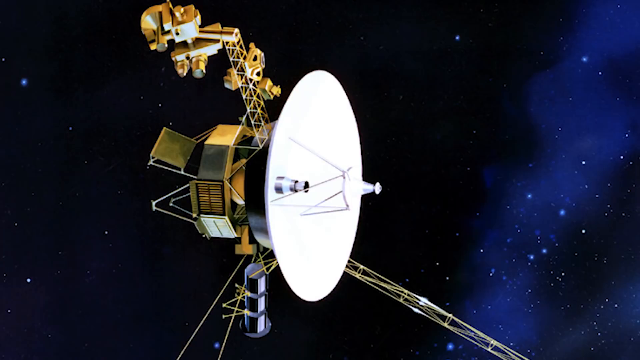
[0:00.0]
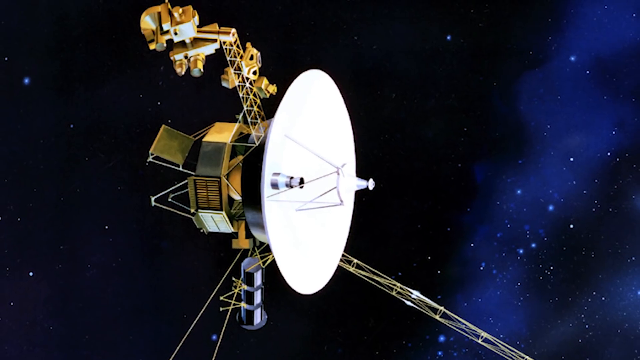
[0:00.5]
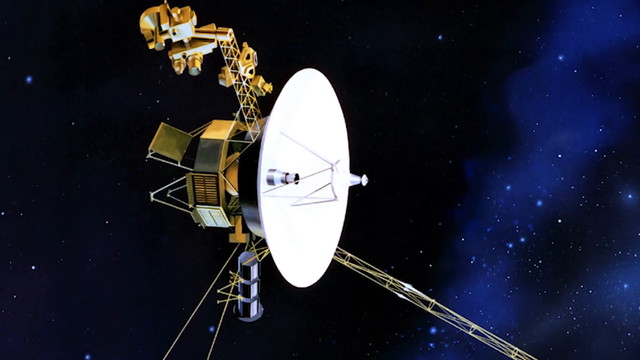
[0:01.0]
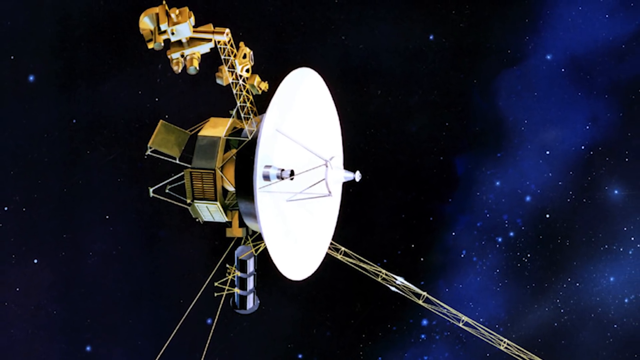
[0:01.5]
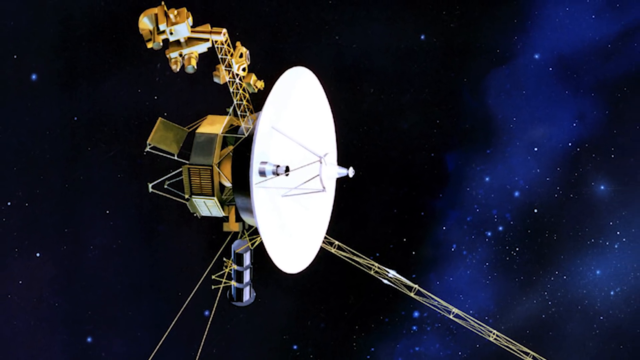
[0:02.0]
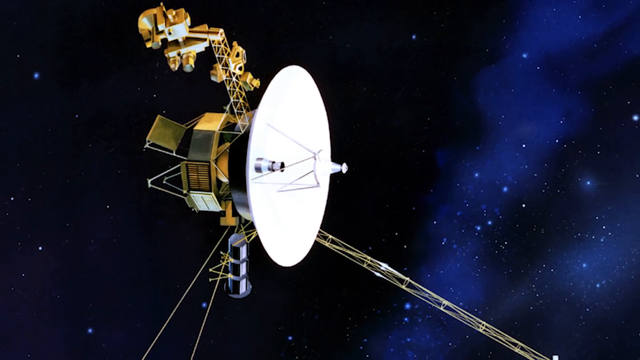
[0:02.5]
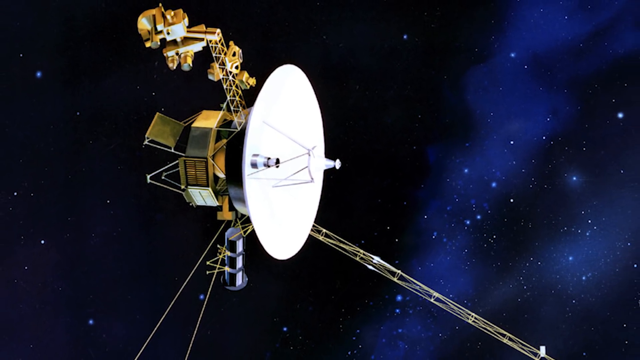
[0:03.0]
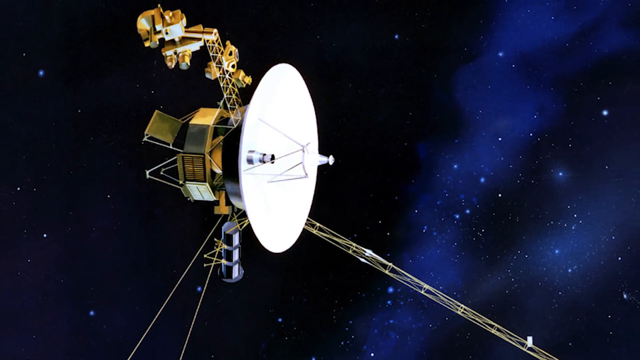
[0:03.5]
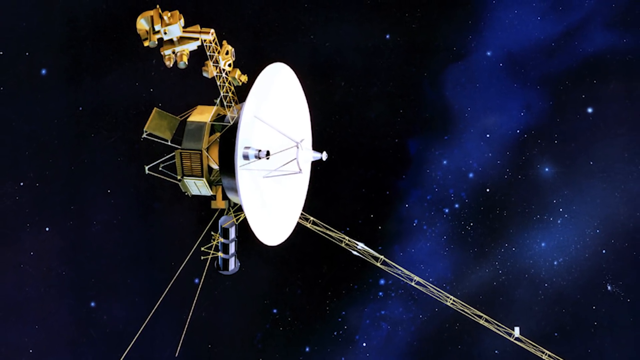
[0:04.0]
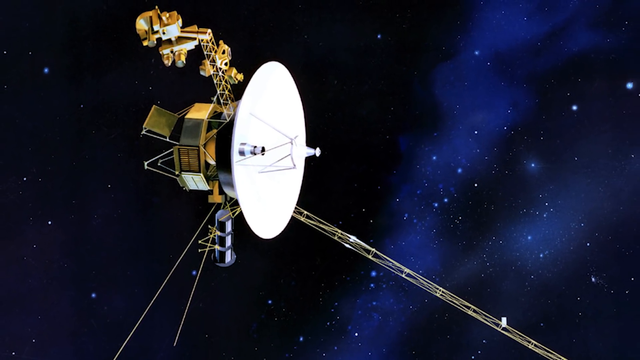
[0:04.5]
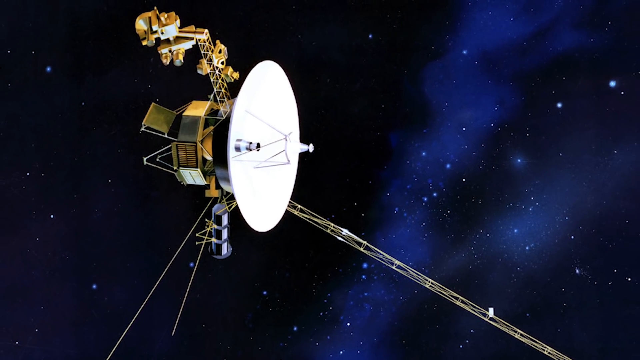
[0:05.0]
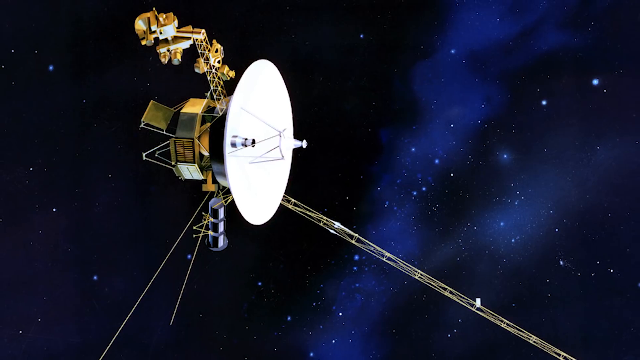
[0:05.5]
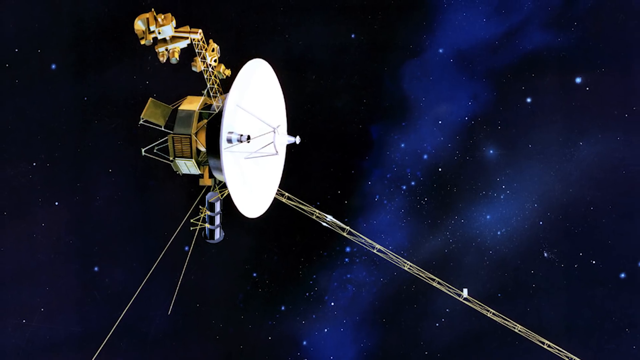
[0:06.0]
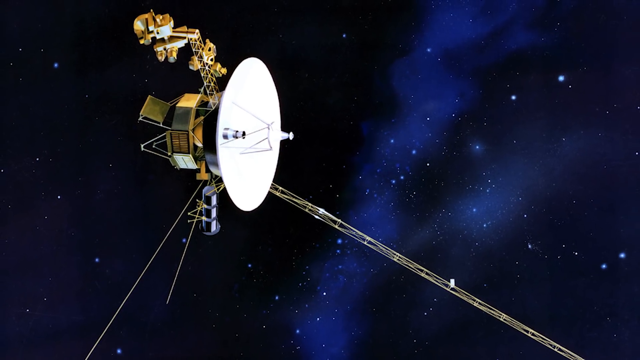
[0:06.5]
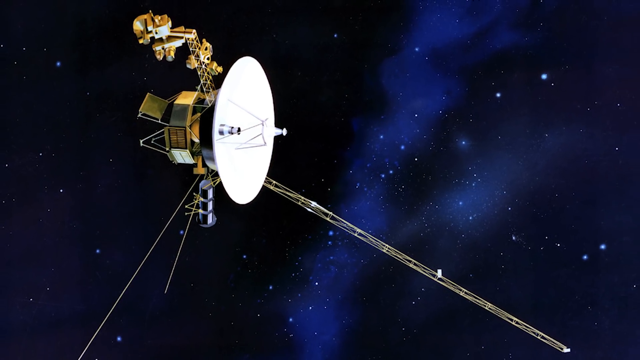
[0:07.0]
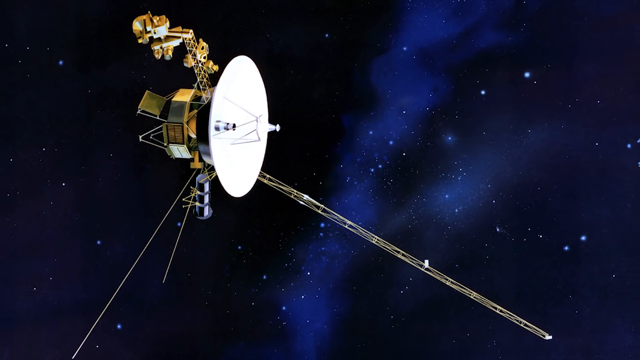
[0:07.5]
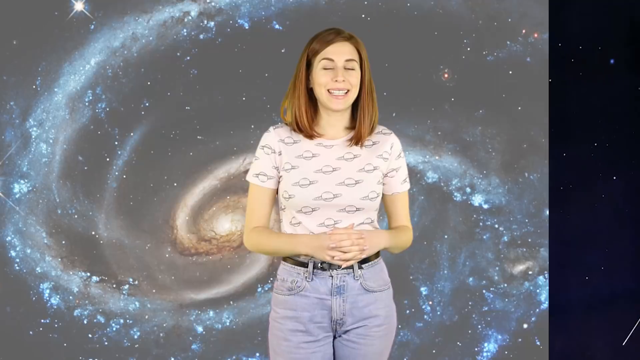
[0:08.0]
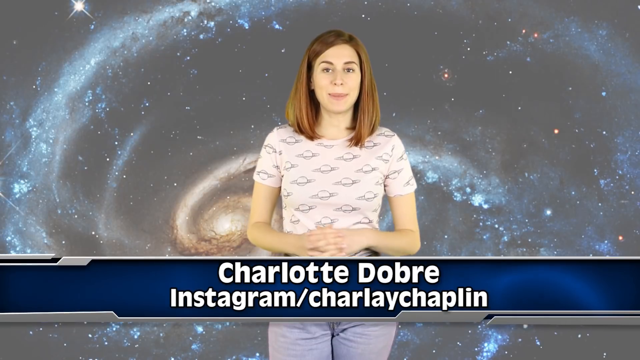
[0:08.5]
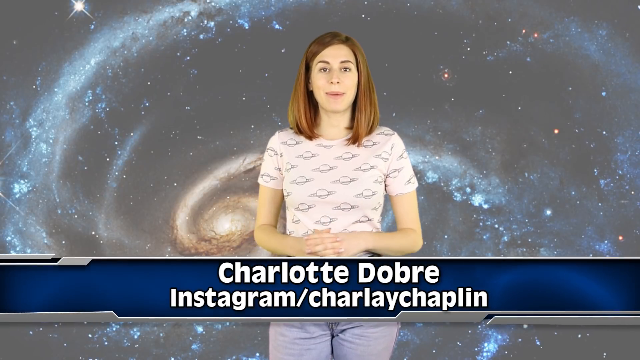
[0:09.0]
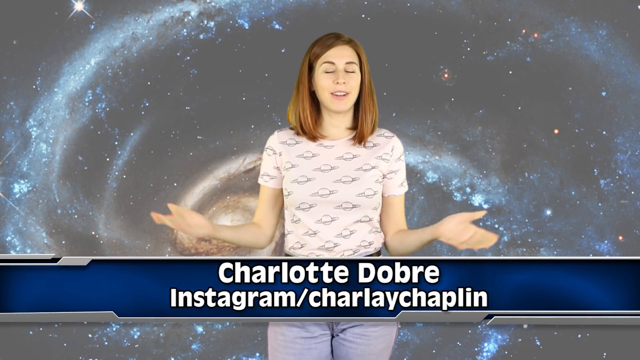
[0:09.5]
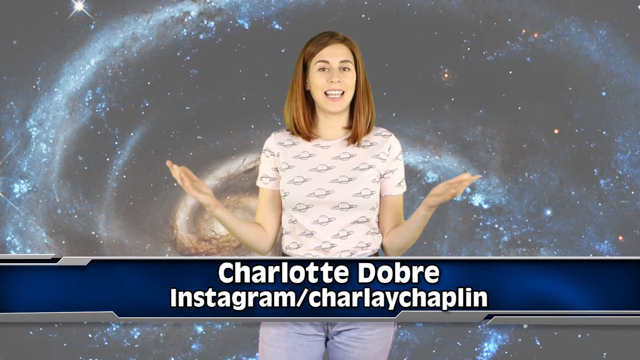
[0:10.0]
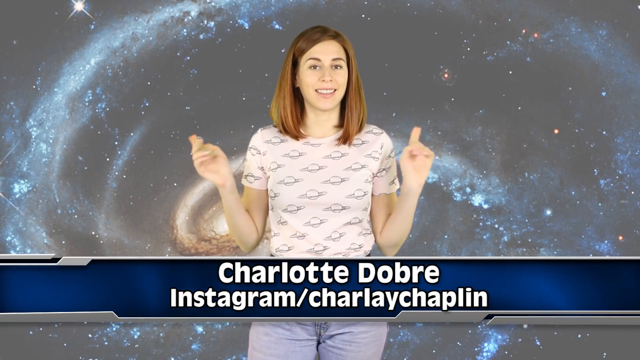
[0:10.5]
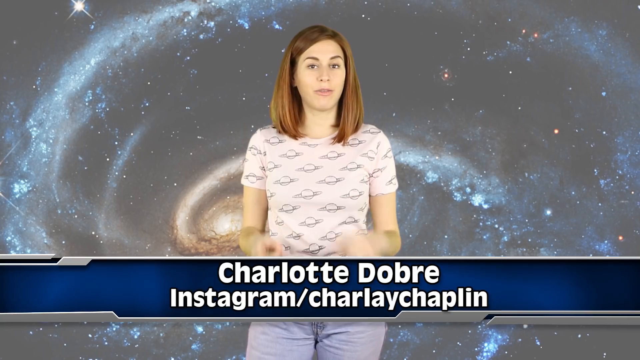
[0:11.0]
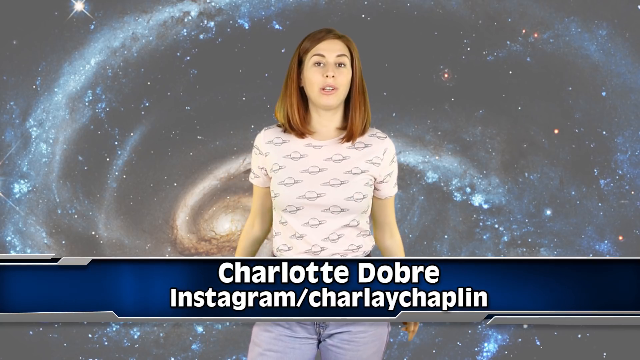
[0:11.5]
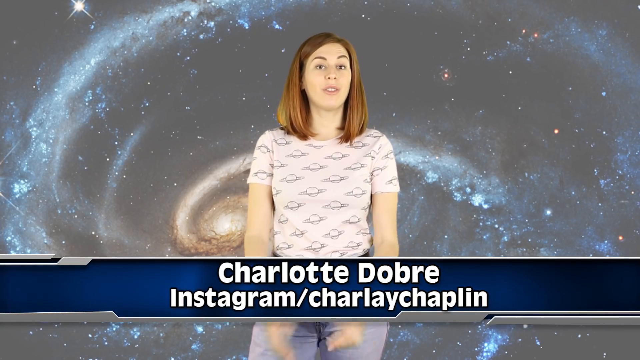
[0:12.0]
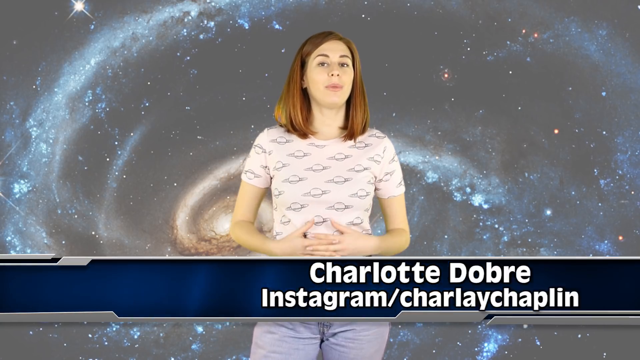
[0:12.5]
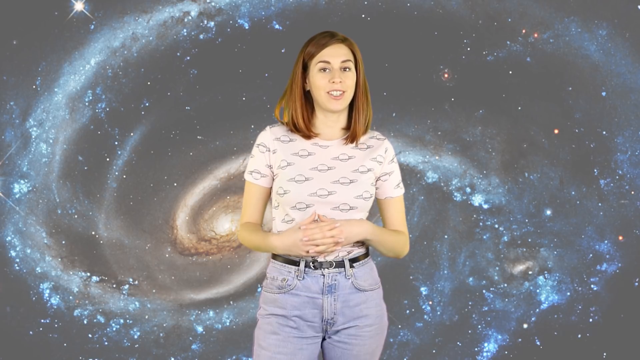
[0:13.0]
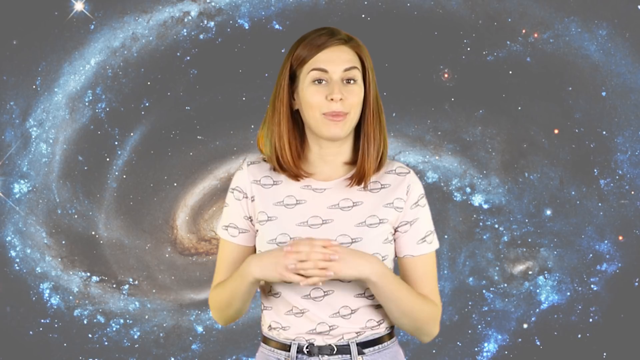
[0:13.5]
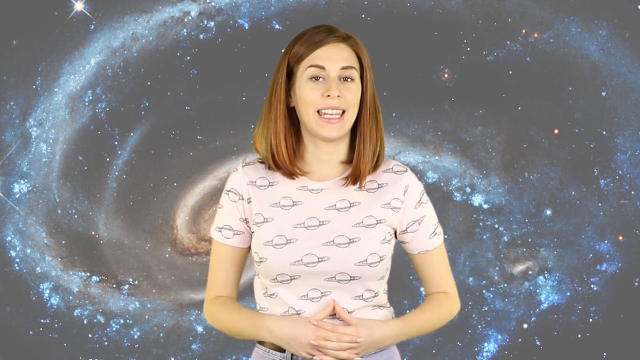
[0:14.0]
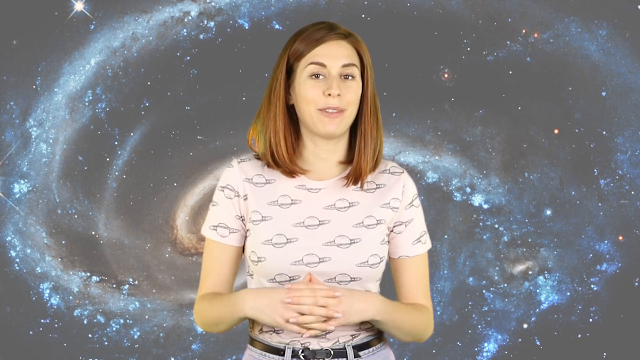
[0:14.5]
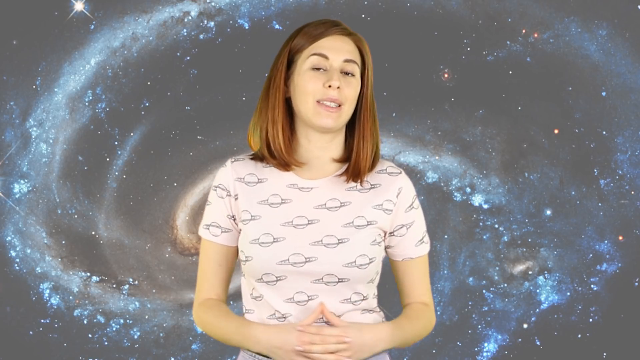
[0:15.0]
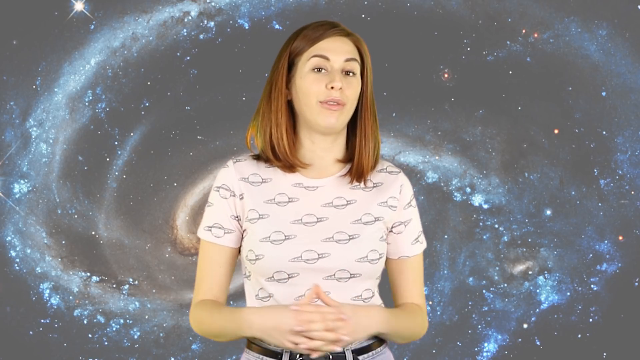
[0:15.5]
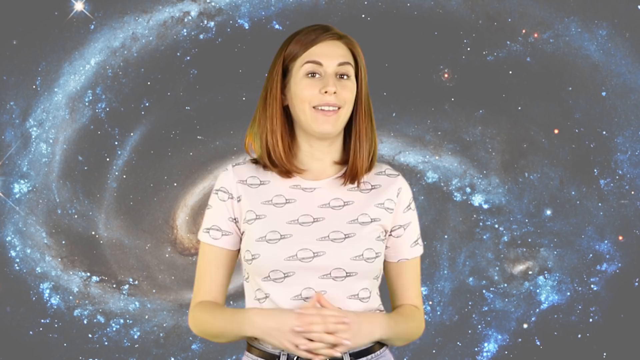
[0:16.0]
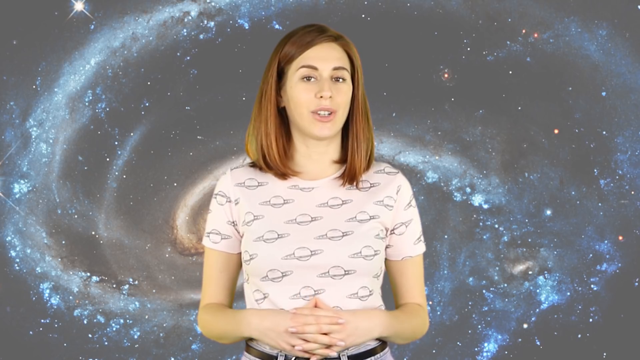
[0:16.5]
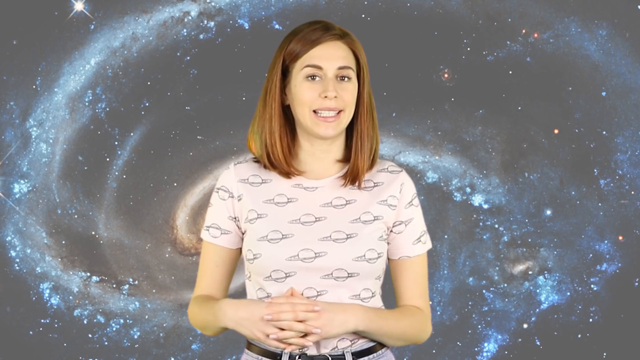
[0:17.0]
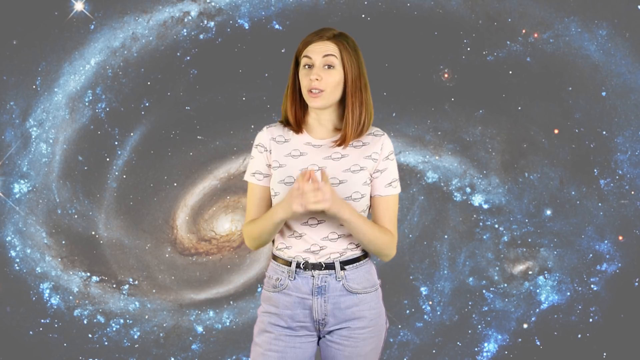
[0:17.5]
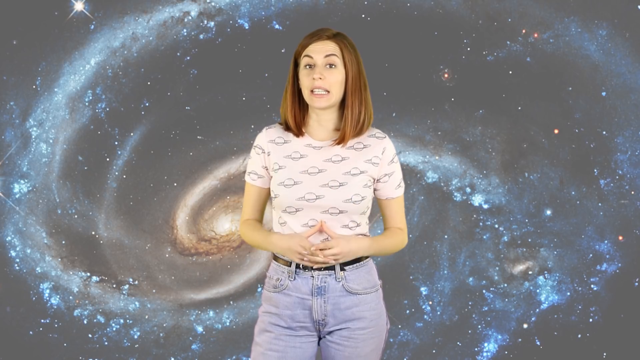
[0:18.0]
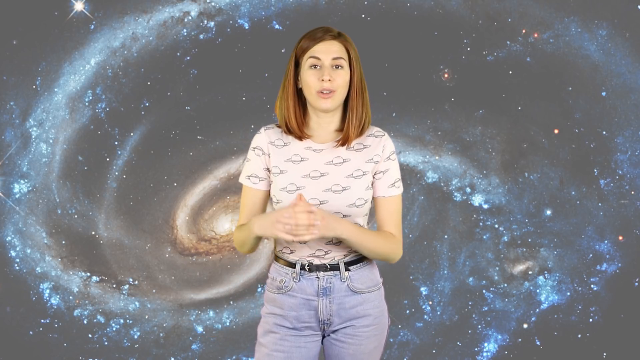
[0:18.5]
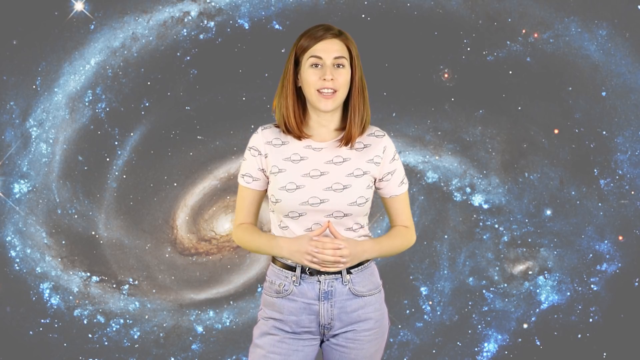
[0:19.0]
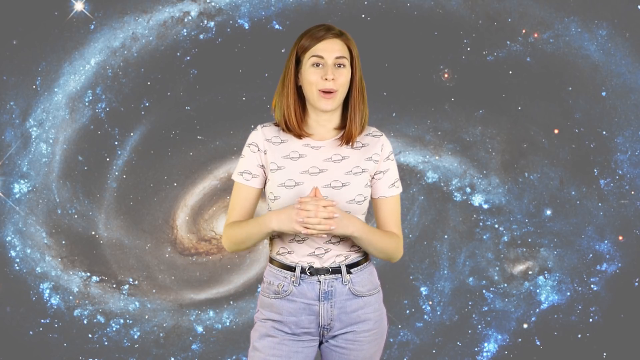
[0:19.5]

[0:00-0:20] A satellite floats in space in the middle of the frame. The view zooms out and the satellite moves to the left side. It is a basic satellite, shown as a still image in space, with stars behind it against a very dark background. The scene changes to a woman standing in the middle, looking directly at the viewer with her hands together. She spreads her hands apart, and text at the bottom gives her name as "Charlotte Dobre". She spreads her hands and arms apart, points toward the viewer with both hands, puts her hands and arms down, and brings her hands together. The view zooms in closer to her; she is still in the middle, facing the viewer. She has medium-length light brown hair and wears a white t-shirt patterned with images of the planet Saturn. She is talking while looking at the viewer. Behind her is a light, faded picture of the galaxy. The view zooms out, and she is still in the middle, facing the viewer and talking; she wears light blue jeans and a belt. An image of a satellite in space then appears.